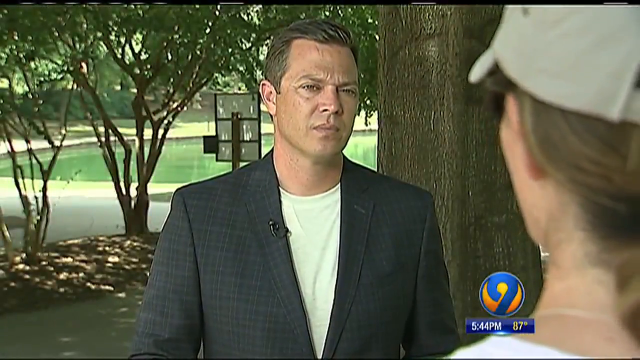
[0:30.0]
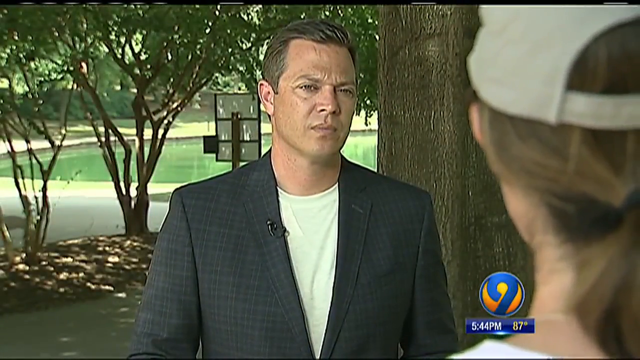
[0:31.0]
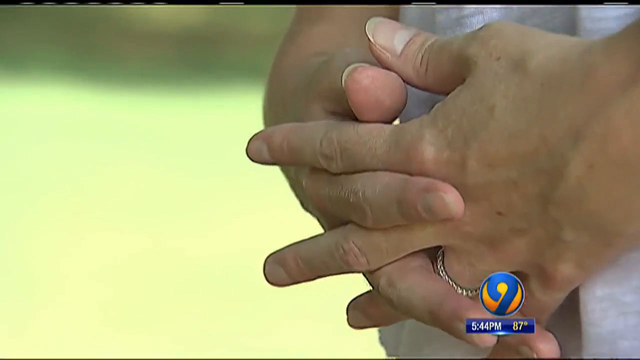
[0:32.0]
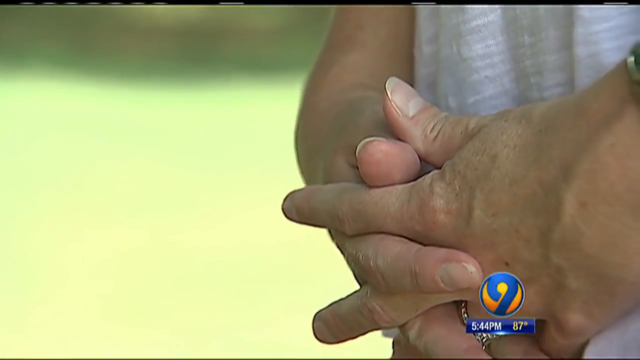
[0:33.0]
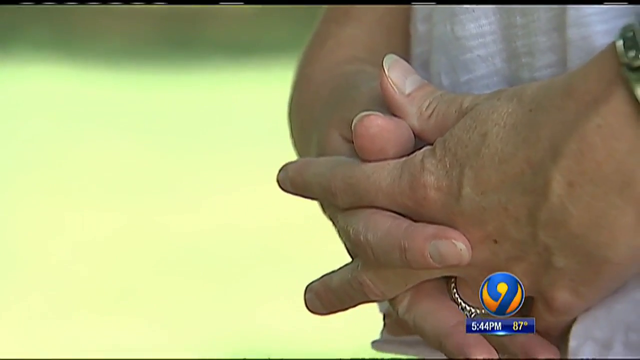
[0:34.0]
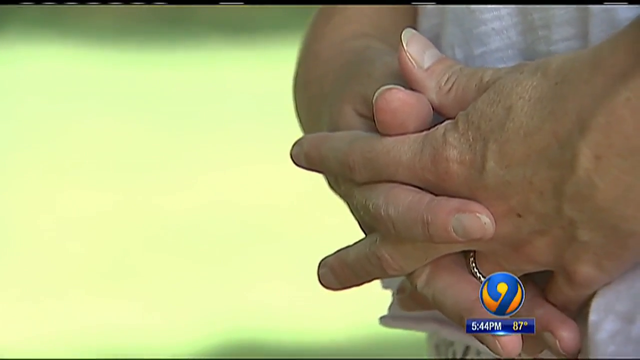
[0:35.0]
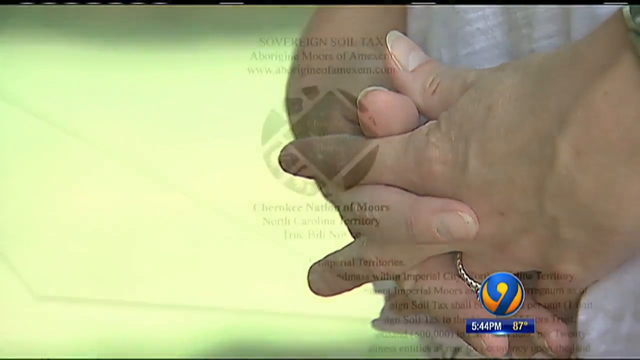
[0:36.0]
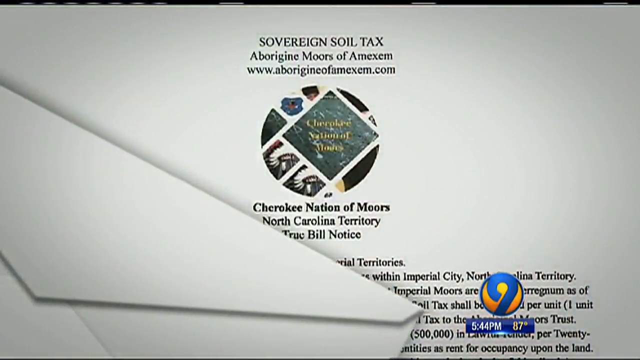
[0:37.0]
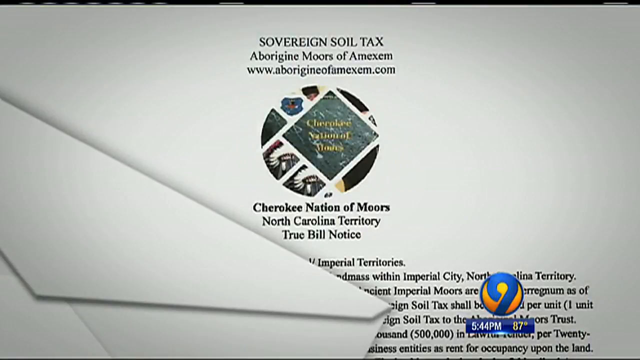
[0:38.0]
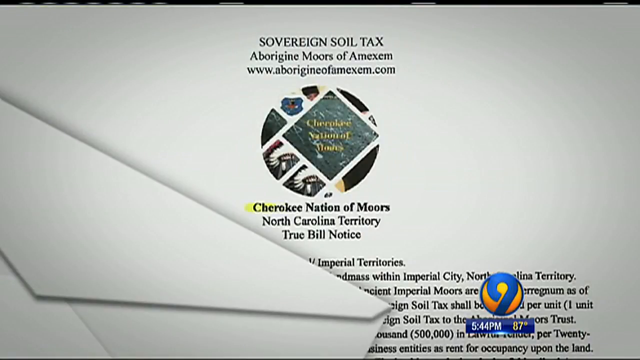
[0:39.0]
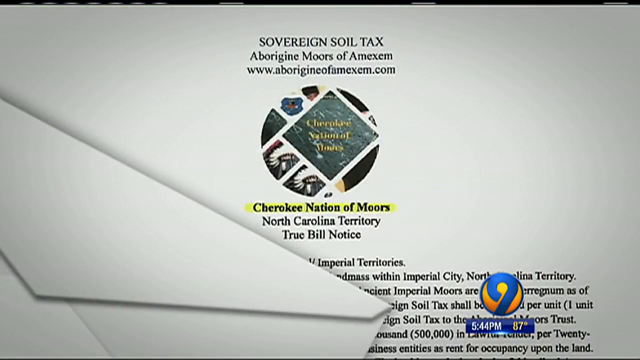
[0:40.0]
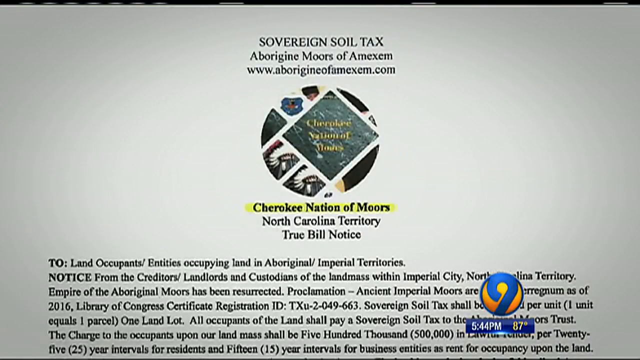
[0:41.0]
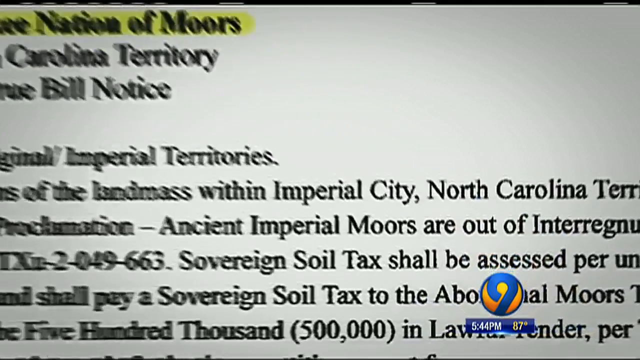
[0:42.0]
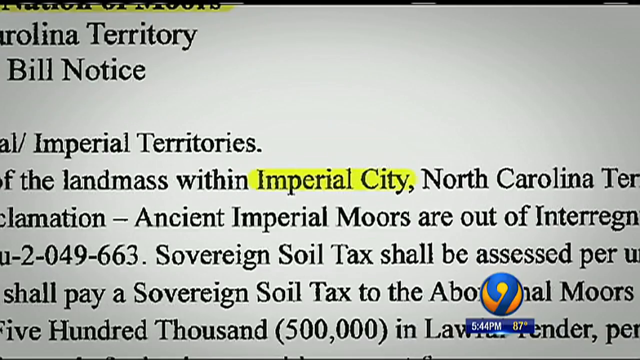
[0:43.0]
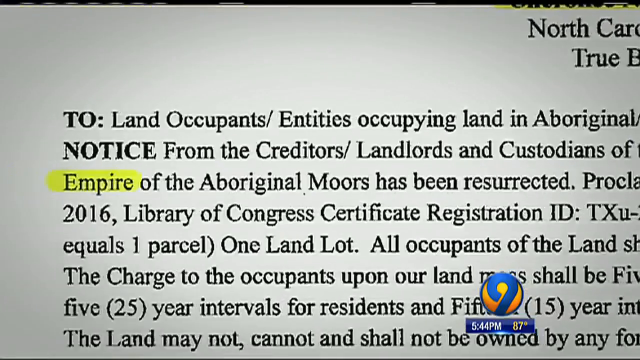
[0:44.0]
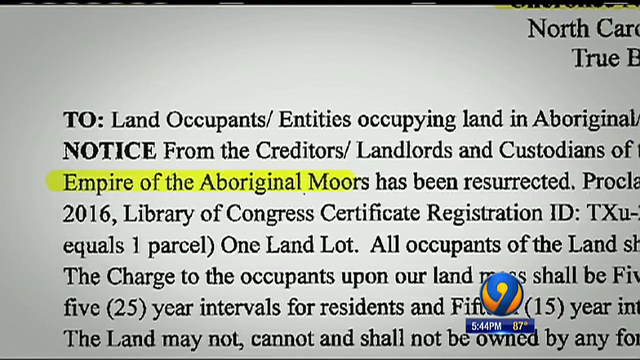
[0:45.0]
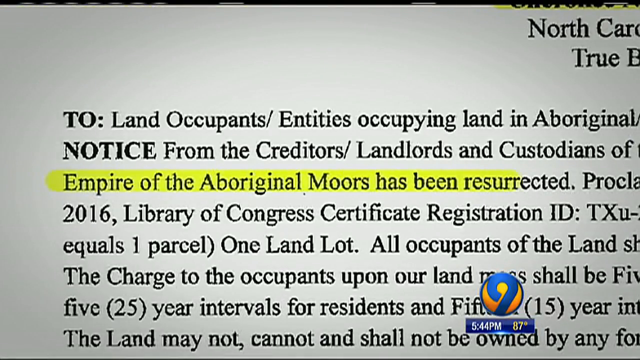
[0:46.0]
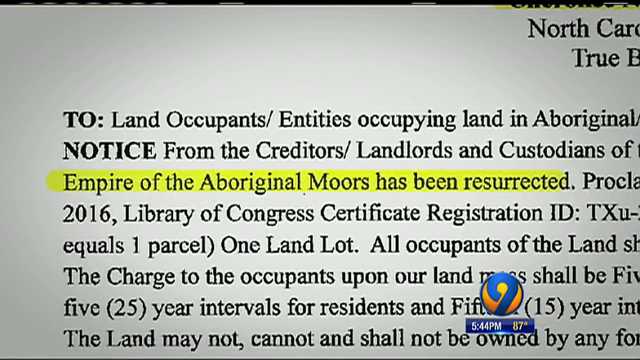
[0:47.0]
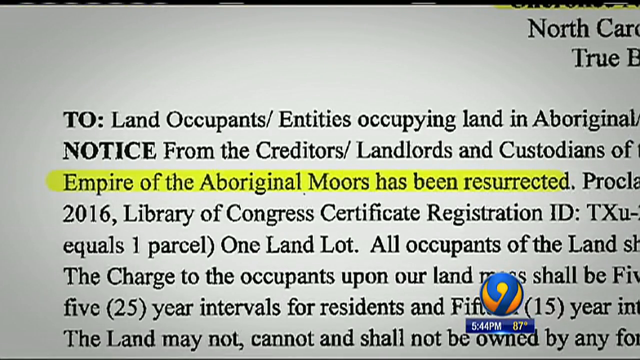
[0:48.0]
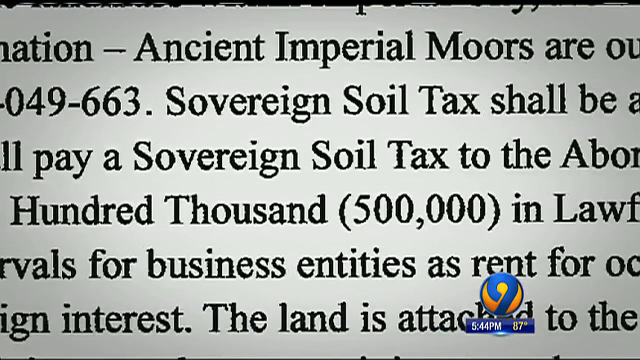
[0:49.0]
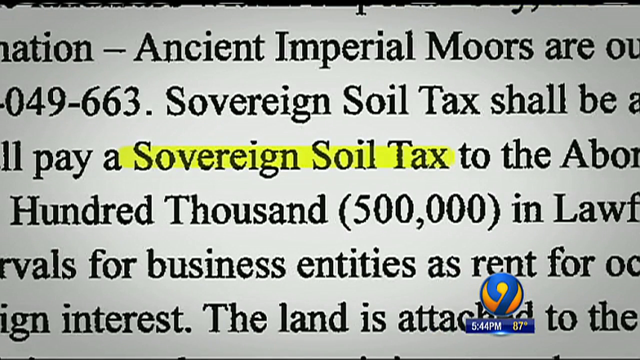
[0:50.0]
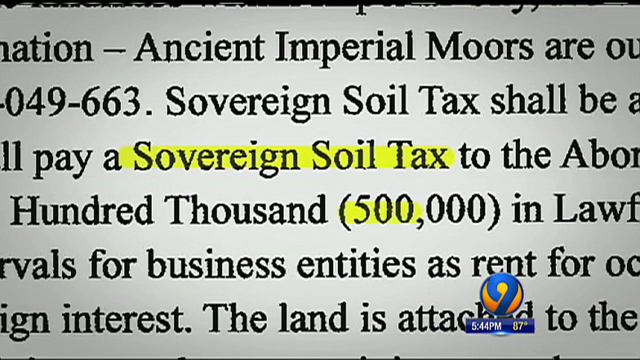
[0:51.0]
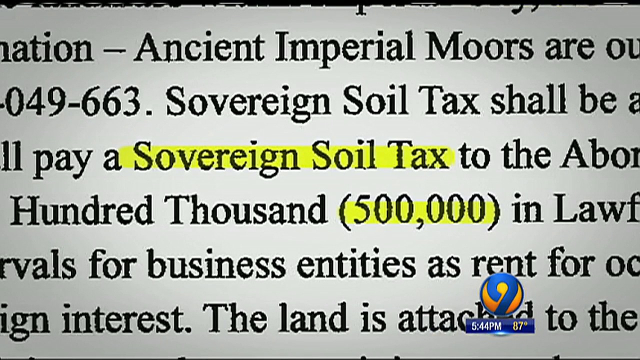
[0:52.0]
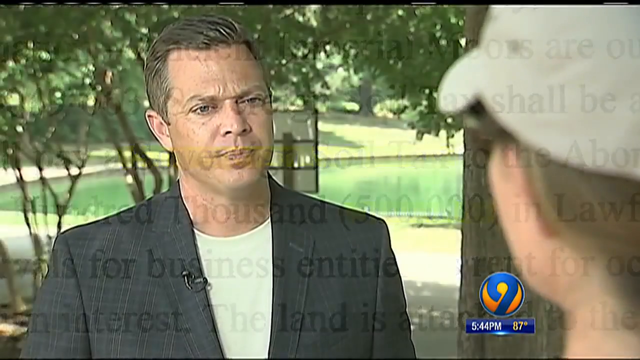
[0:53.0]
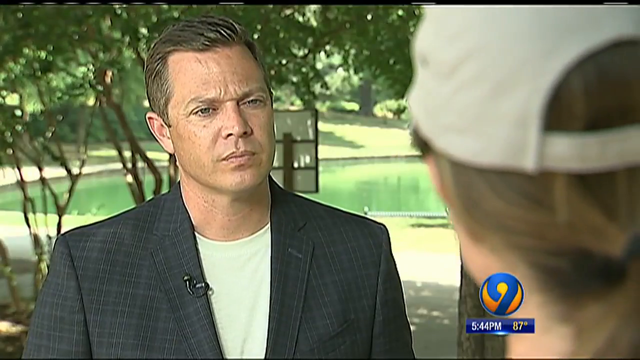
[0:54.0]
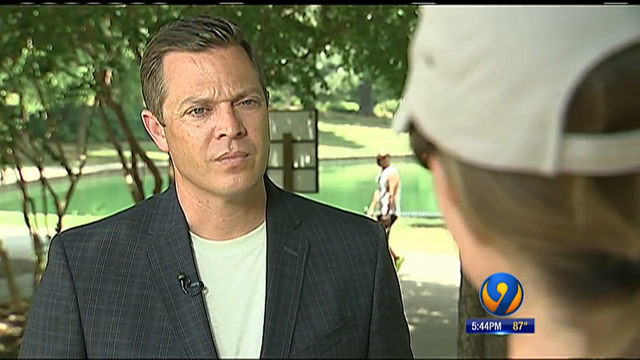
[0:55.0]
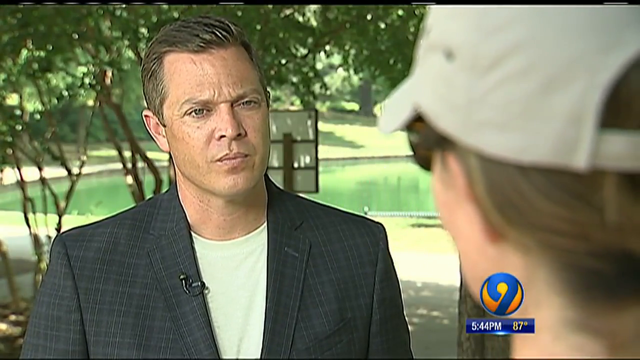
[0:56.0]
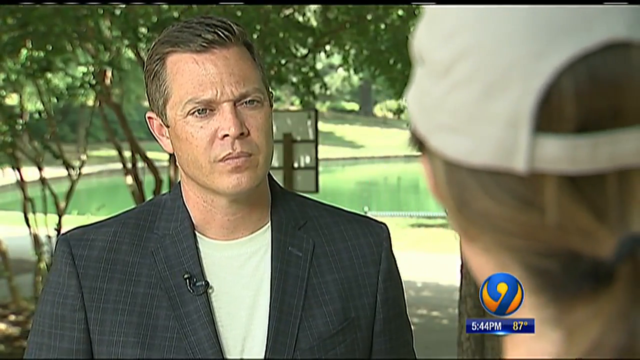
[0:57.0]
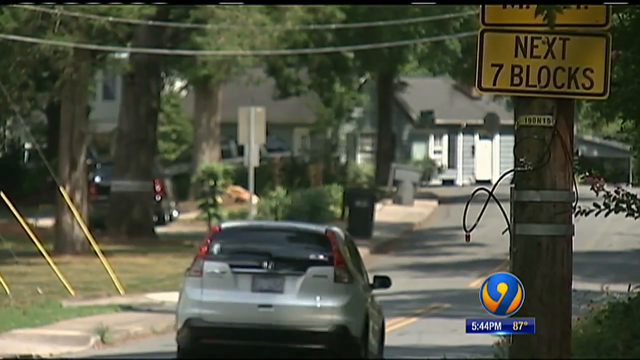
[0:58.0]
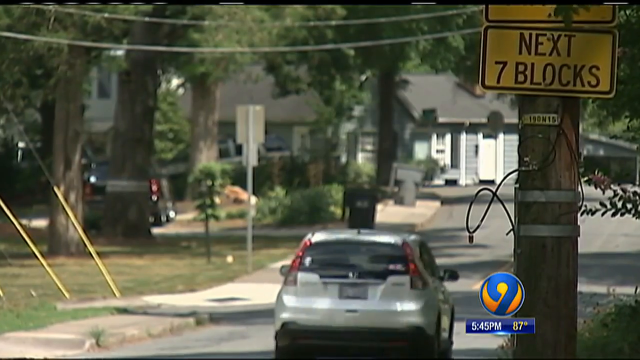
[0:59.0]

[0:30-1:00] The Channel 9 Investigates reporter talks to a woman wearing dark glasses and a hat who apparently does not want to be on camera. She is then shown with her hands folded down, with the shot focusing on her hands. Text appears reading "Sovereign Soil Tax," "Aborigine Moors of AMXM," "www.aboriginefamexm.com," "Cherokee Nation of Moors," "North Carolina Territory," and "True Bill Notice." Something like a symbol also reads "Cherokee Nation of Moors." Only part of the letter is visible, but it mentions something about $500,000, and the words "Imperial Territories" and "Landmass within Imperial City, North Carolina Territory" can be seen. It seems to be a demand for a tax on people for being on the land, called a soil tax.